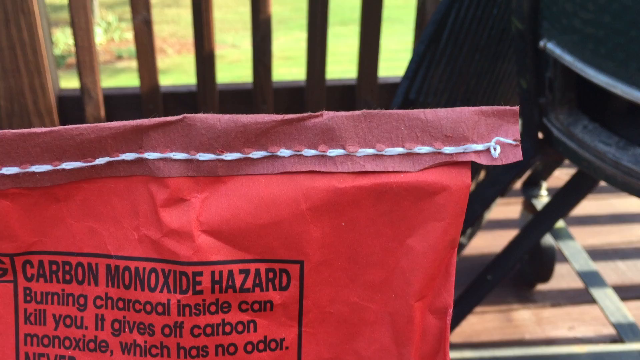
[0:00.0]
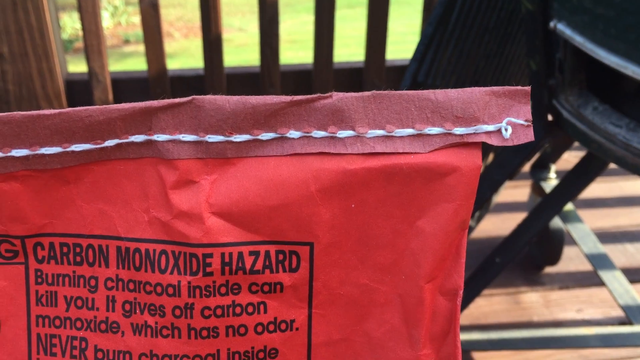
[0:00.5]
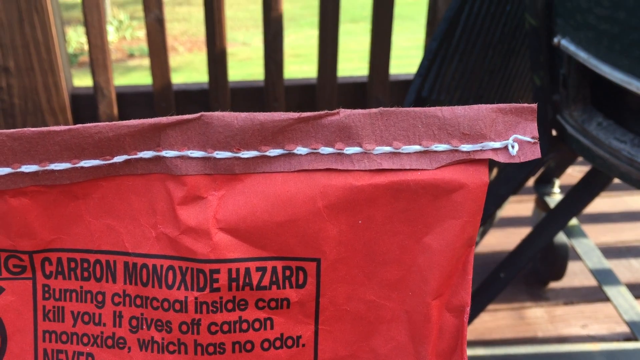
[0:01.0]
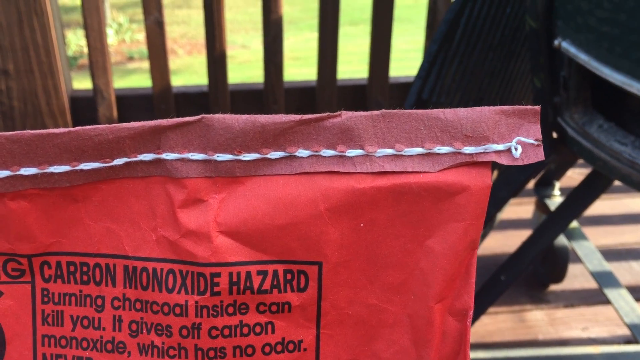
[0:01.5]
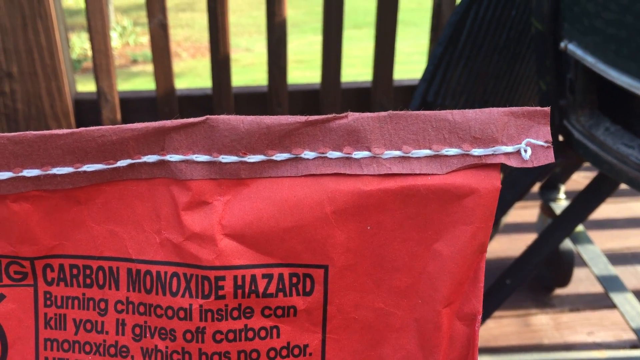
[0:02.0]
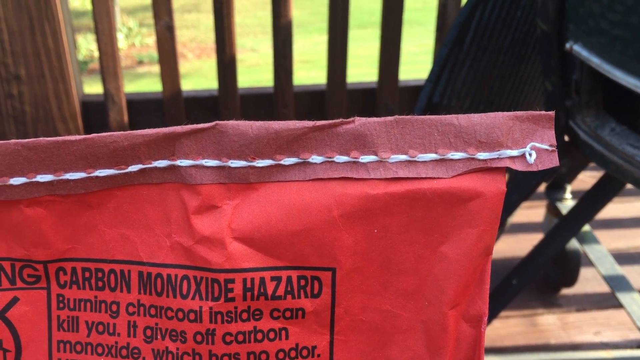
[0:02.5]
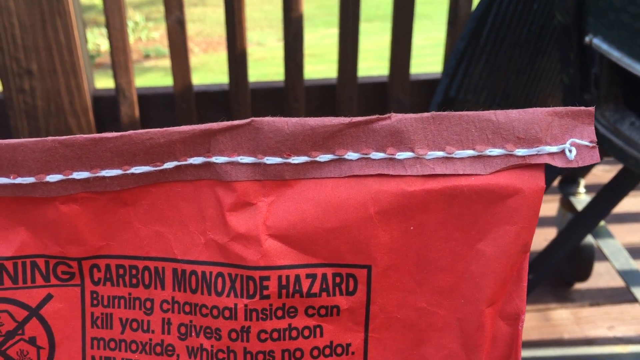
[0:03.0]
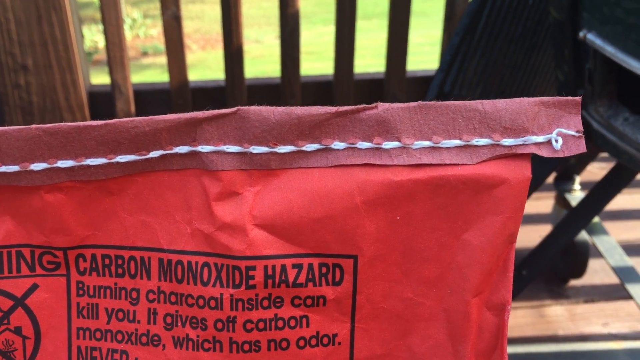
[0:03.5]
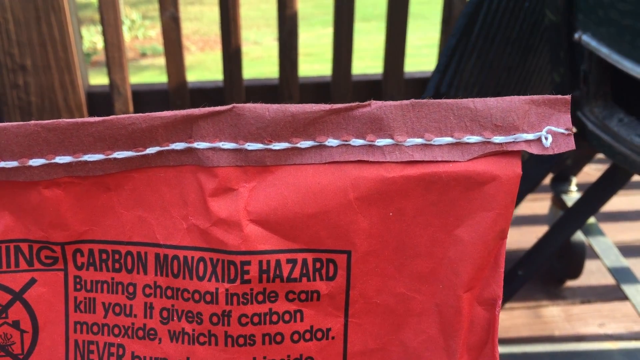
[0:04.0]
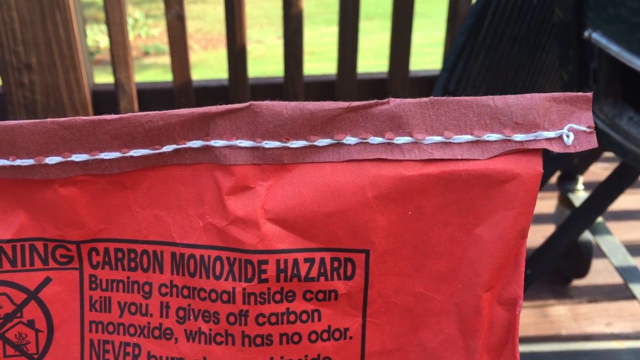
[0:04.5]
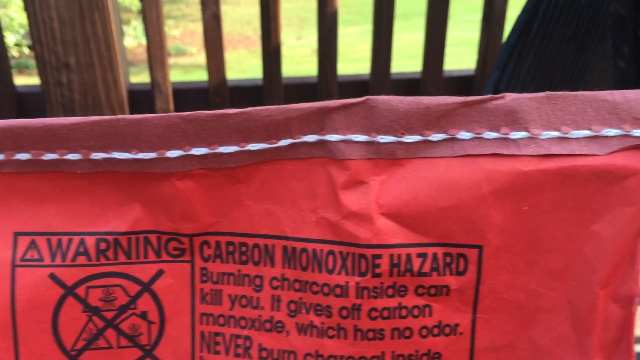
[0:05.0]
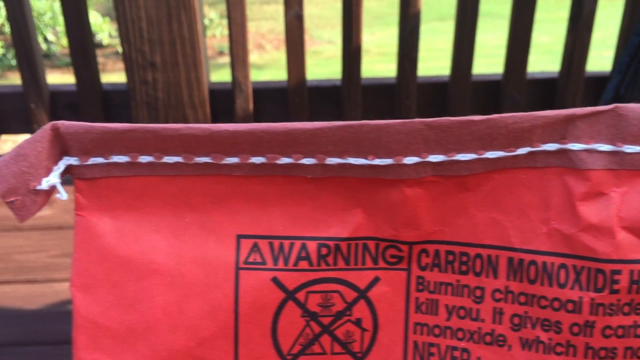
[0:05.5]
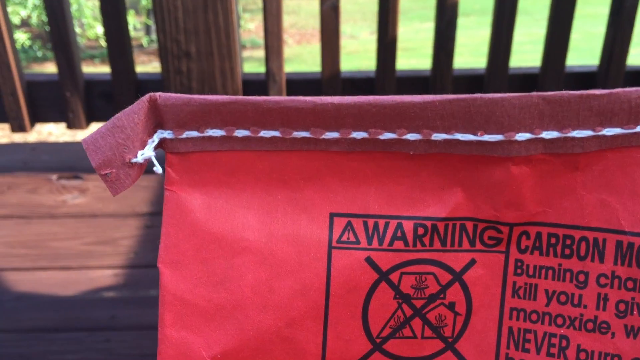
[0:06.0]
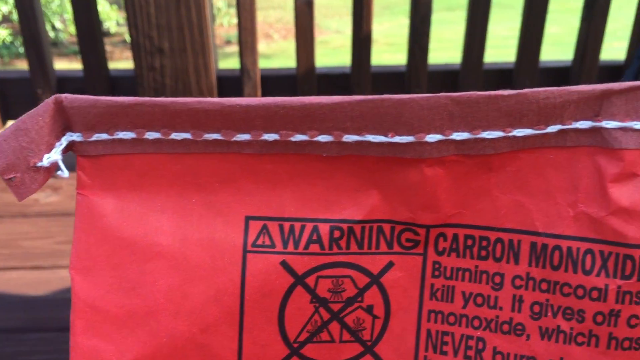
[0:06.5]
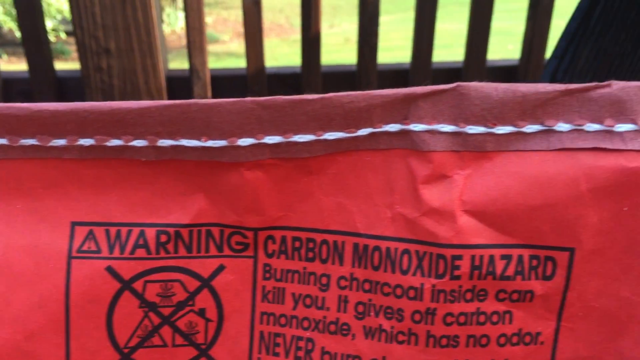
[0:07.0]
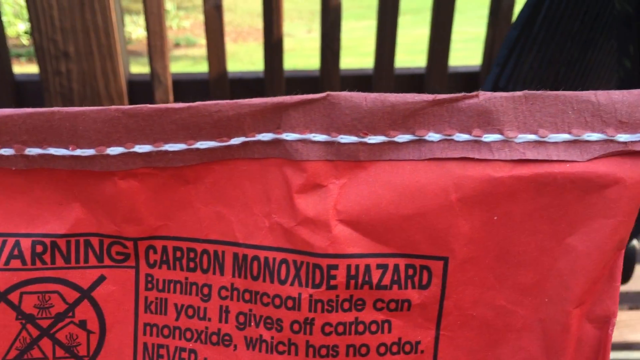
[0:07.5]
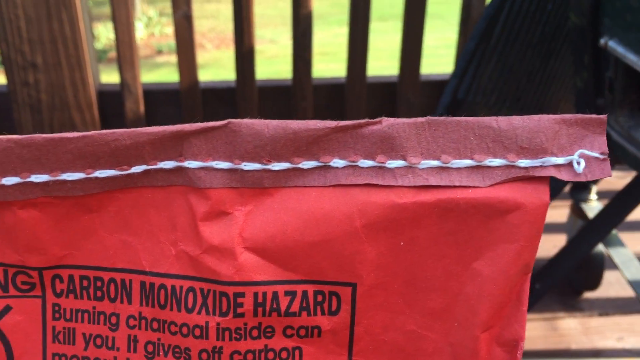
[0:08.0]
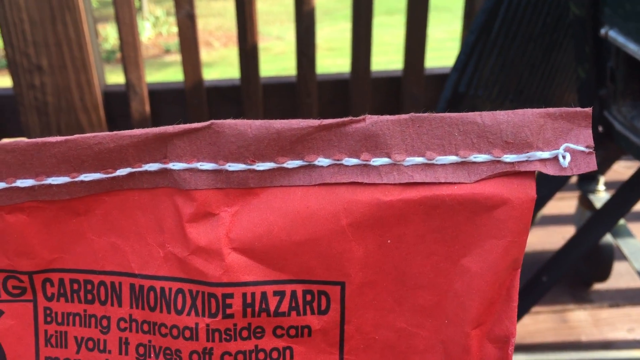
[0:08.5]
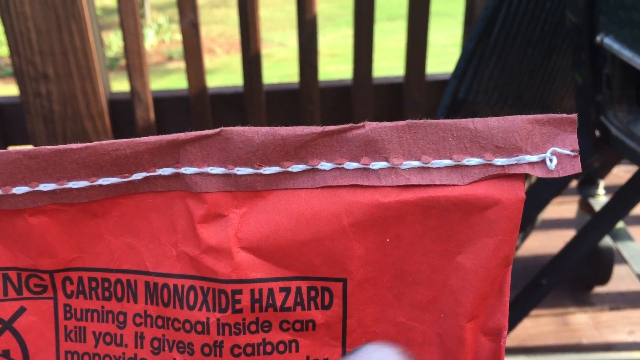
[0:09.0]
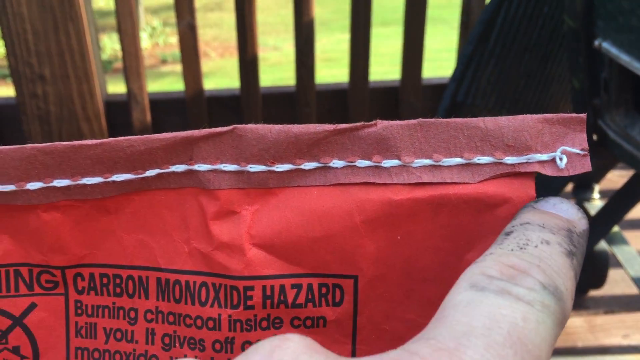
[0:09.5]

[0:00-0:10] A packet that looks like manure or compost is shown; it is red, and there is only one packet in front of the camera. The packaging is written in black ink, and the writing states that it has carbon monoxide and that there is charcoal inside. Some other text is also written on it. The main setting in the background is not clear.